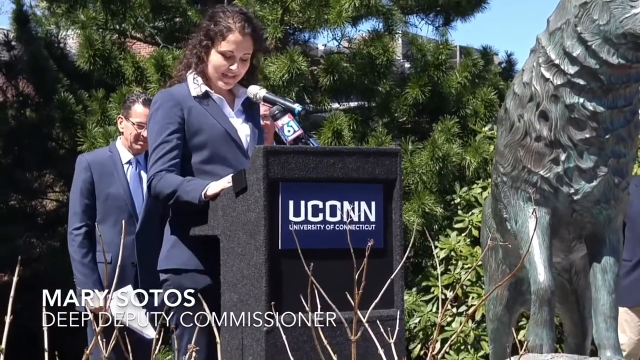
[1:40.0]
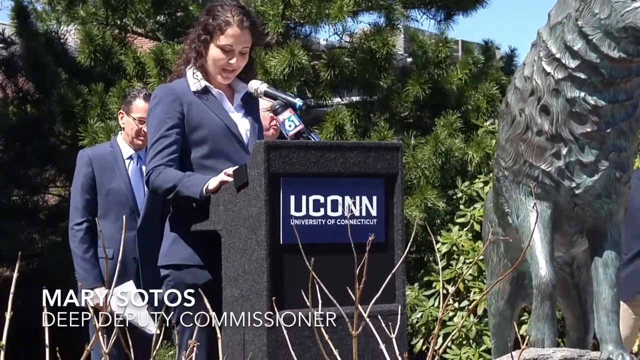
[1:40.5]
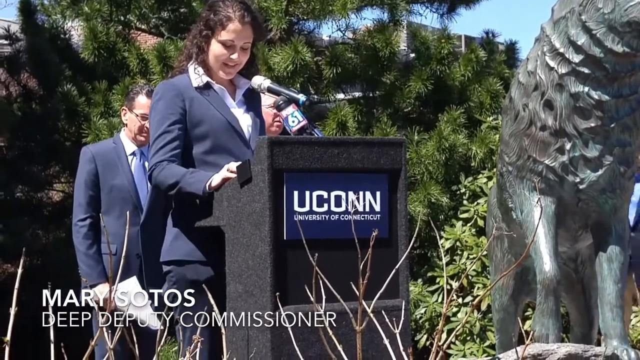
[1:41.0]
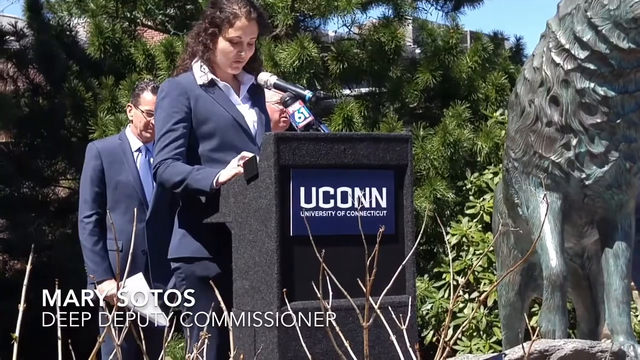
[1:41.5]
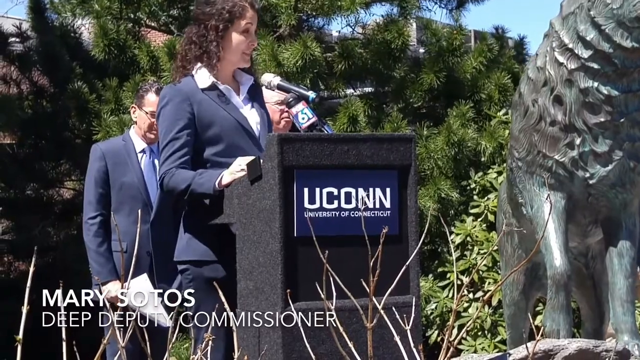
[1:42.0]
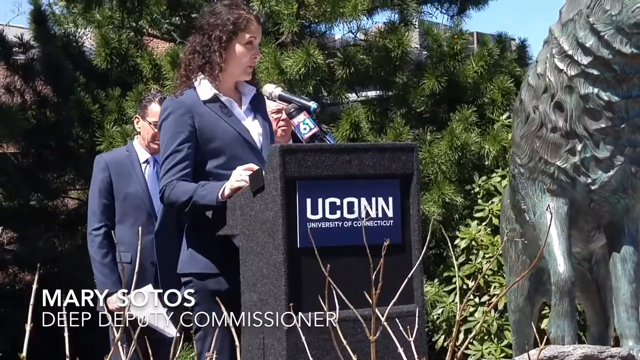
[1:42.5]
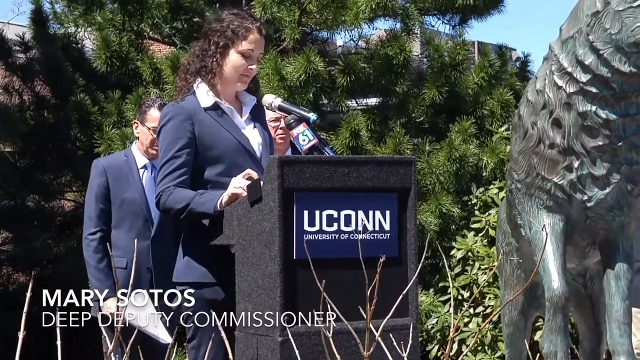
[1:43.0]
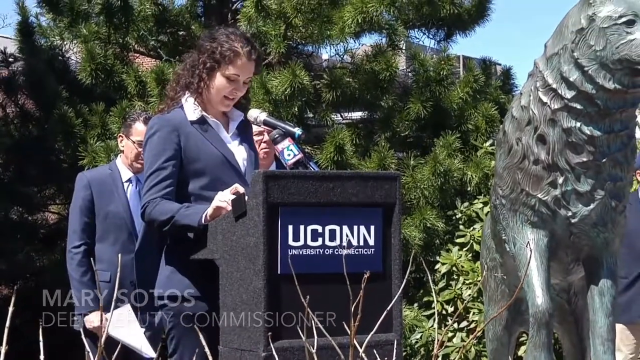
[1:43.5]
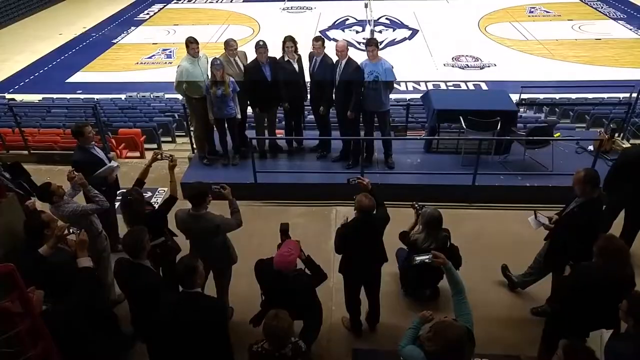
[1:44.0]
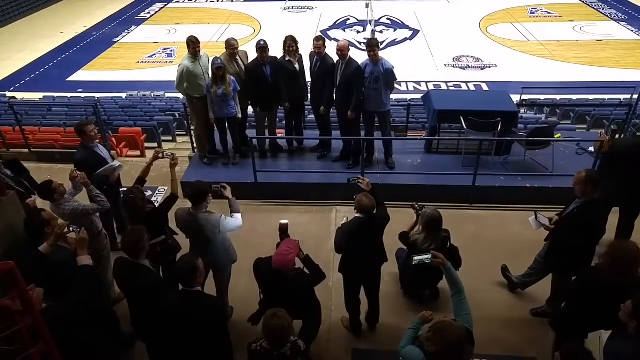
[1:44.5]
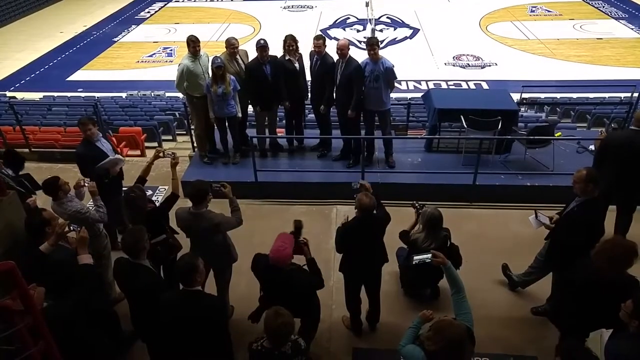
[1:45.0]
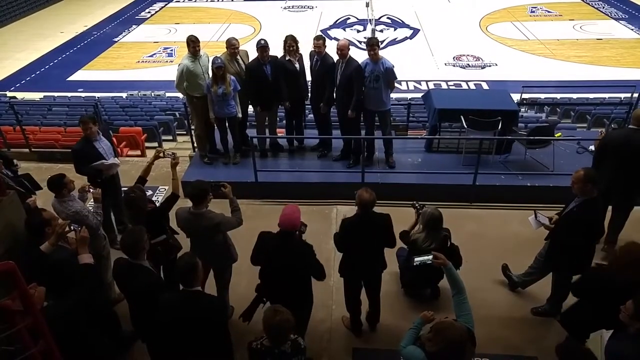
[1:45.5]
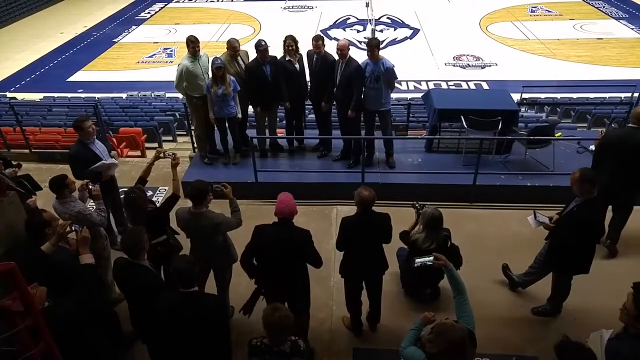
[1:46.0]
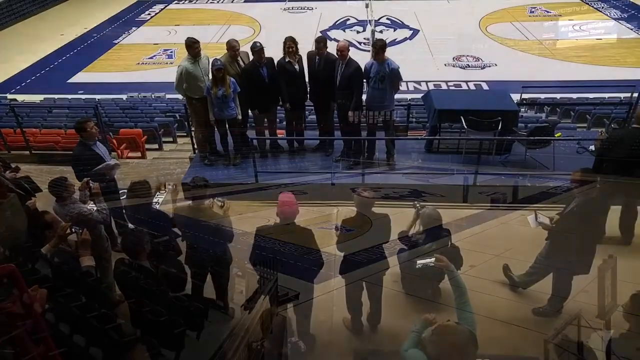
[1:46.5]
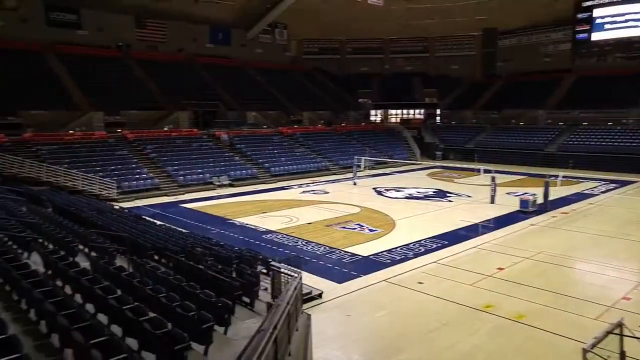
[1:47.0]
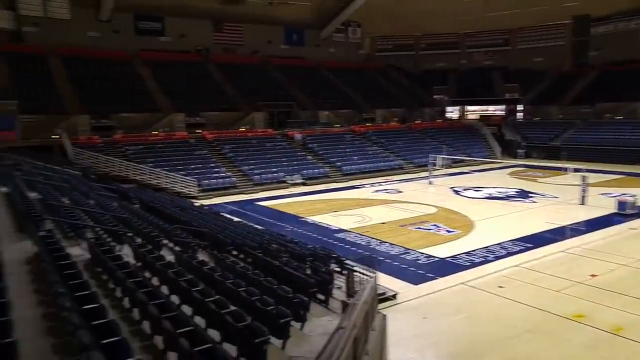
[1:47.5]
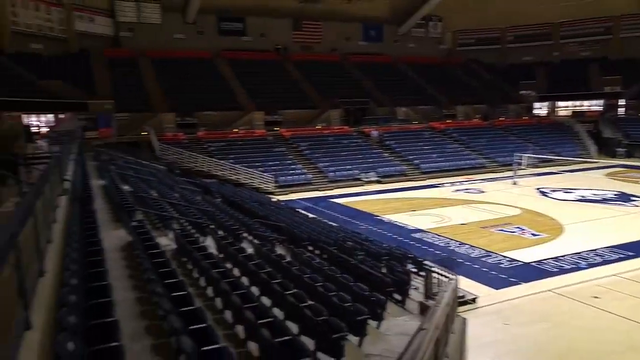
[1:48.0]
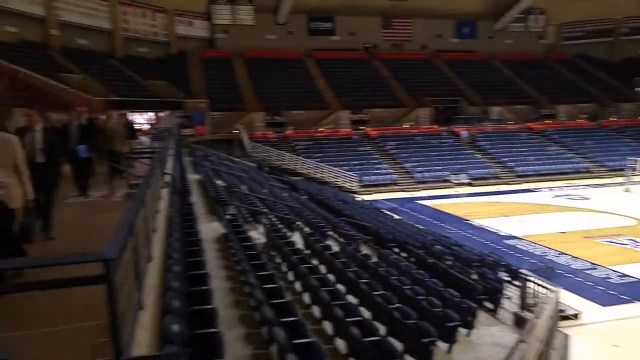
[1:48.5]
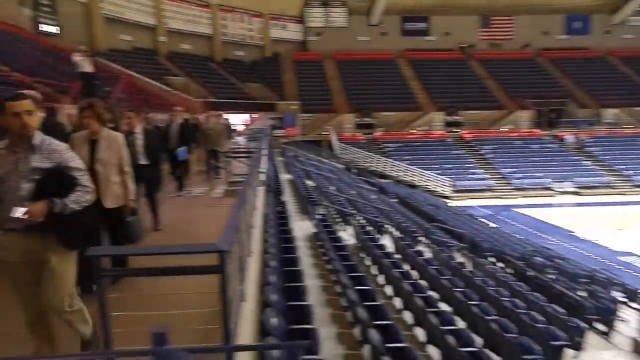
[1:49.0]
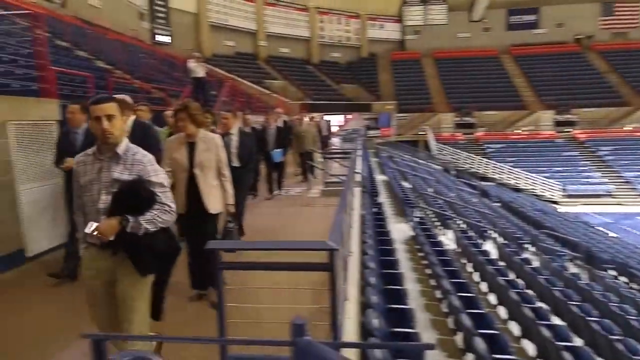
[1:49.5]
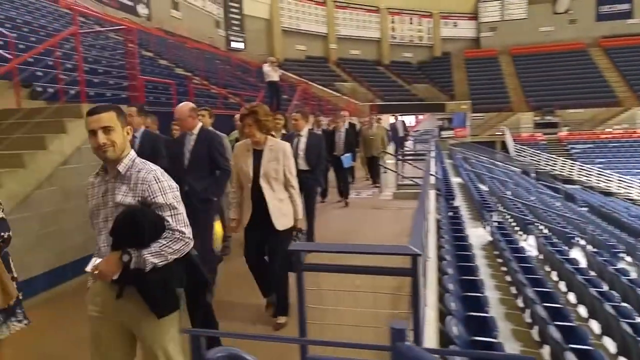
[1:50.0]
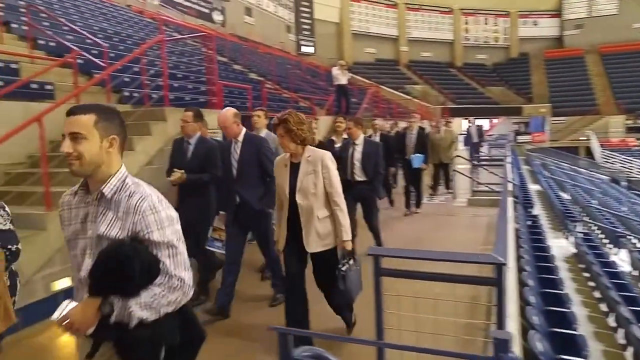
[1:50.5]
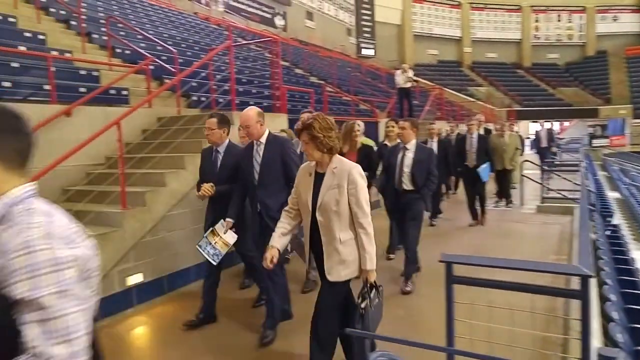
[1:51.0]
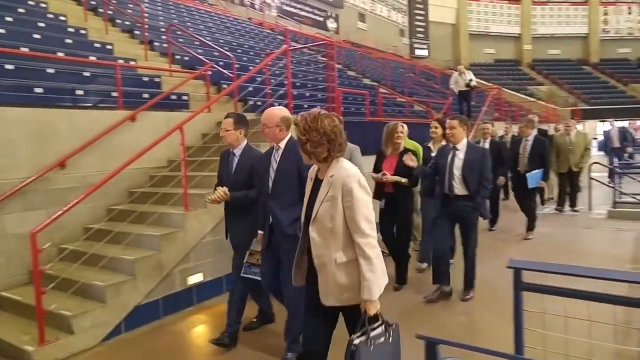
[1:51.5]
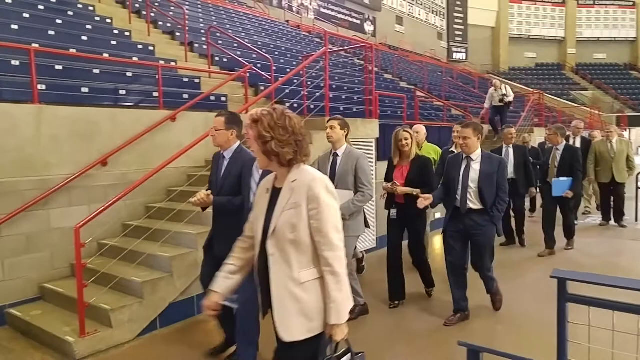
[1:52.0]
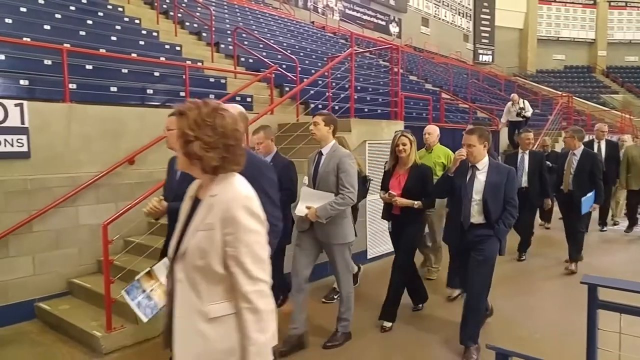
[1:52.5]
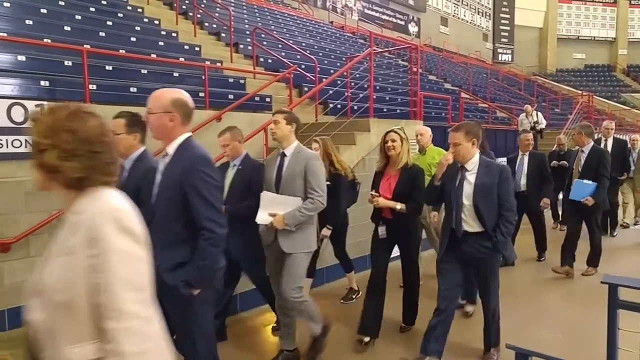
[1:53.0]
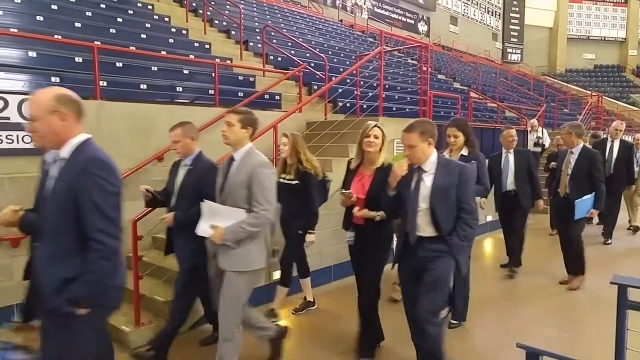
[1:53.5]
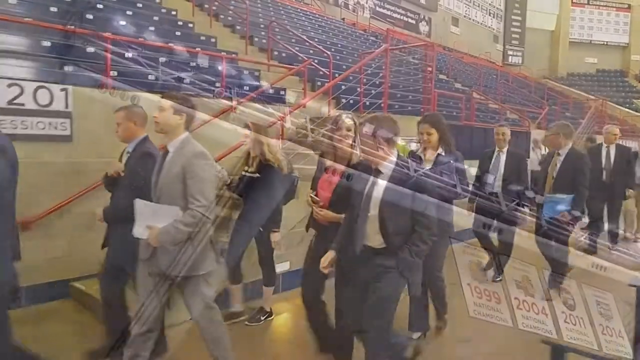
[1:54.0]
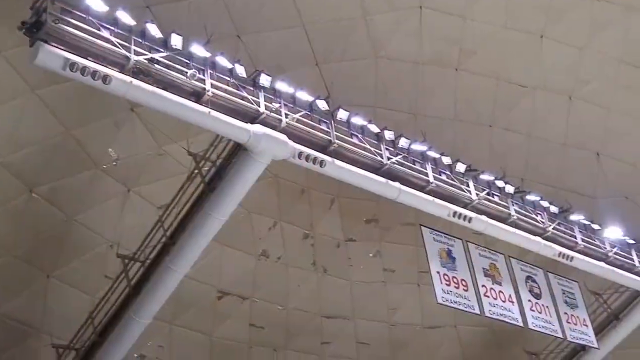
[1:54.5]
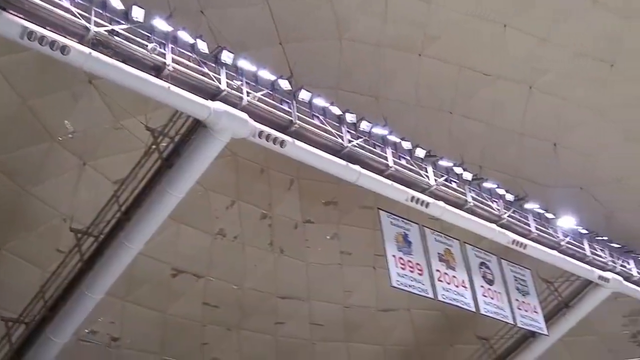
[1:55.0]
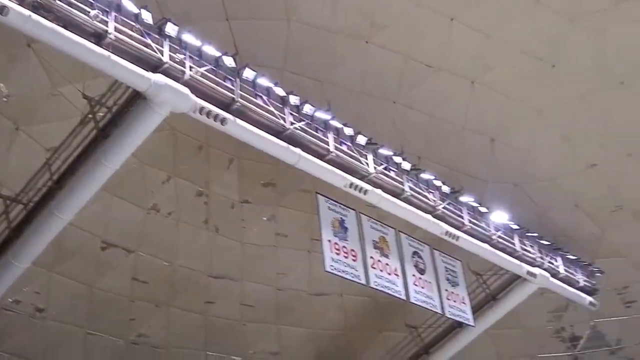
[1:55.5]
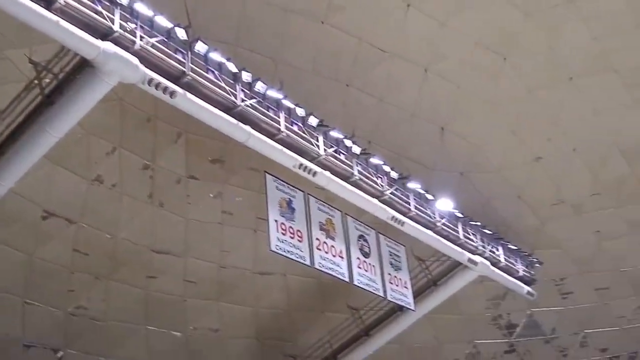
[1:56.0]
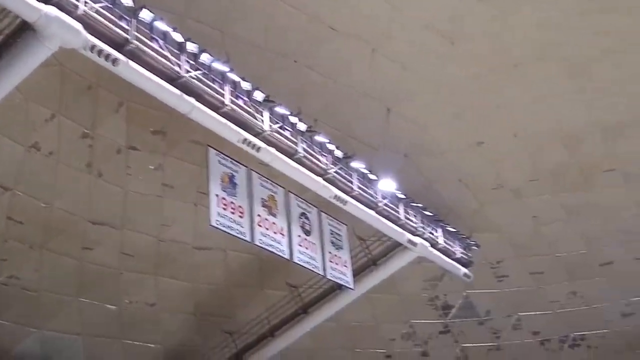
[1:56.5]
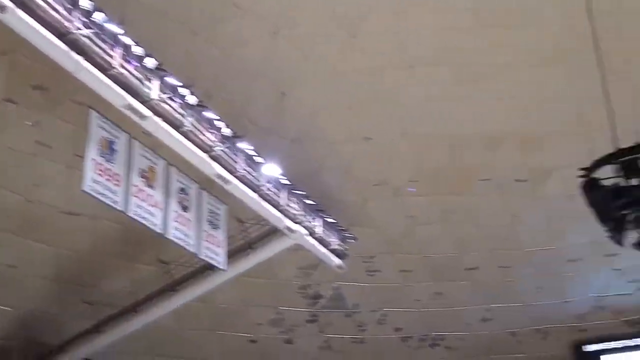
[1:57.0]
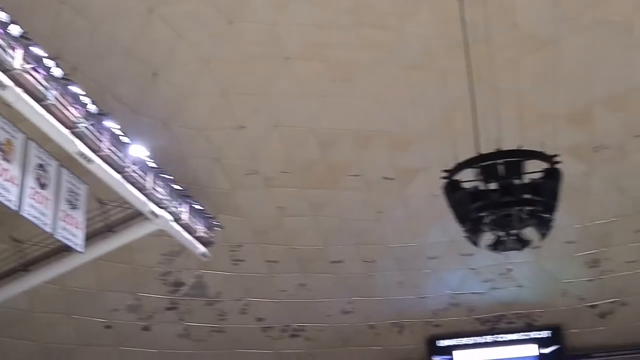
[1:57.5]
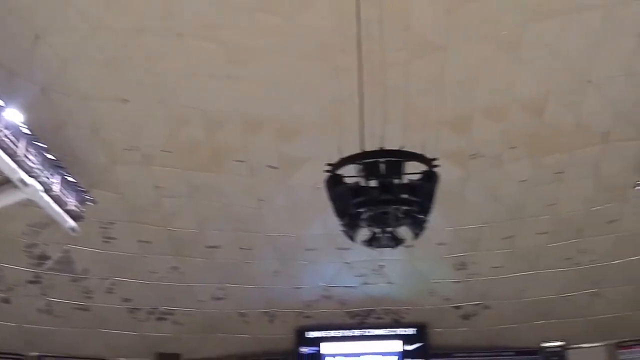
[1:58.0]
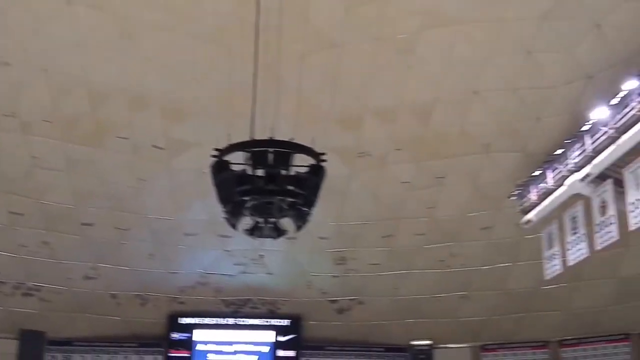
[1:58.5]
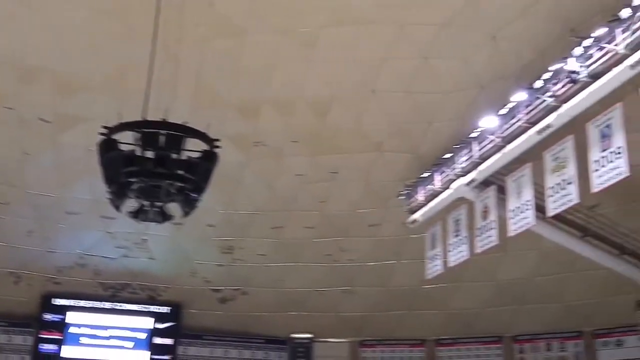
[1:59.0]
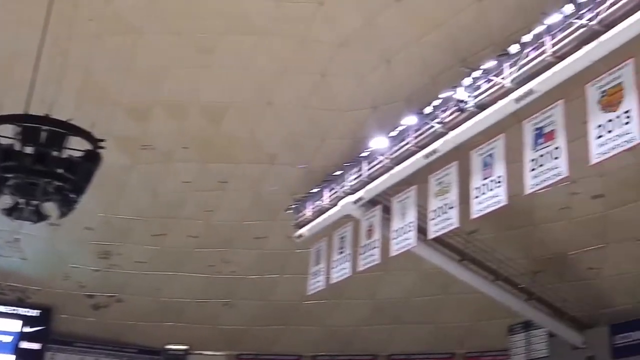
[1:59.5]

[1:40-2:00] Mary Sotos, the deputy commissioner, speaks at the podium to a small group of about 12 people at the University of Connecticut. The scene then shifts to the volleyball stadium, where a flock of people appears to be making their way in. The view pans around the roof or ceiling of the stadium, apparently looking at the light fixtures, possibly the ones controlled earlier from the mobile device.